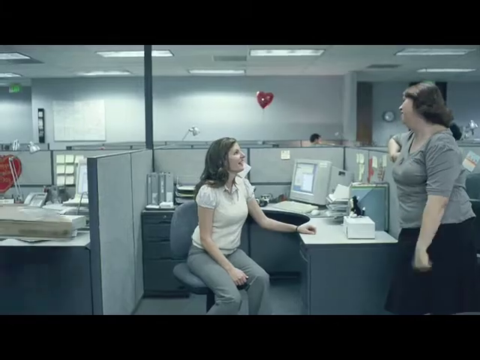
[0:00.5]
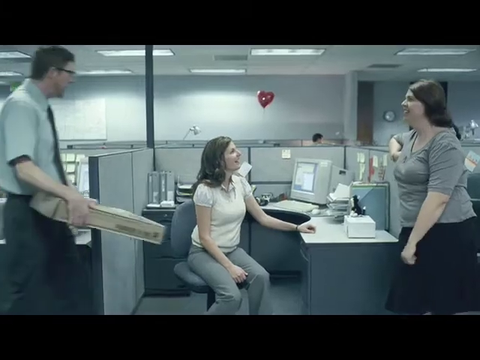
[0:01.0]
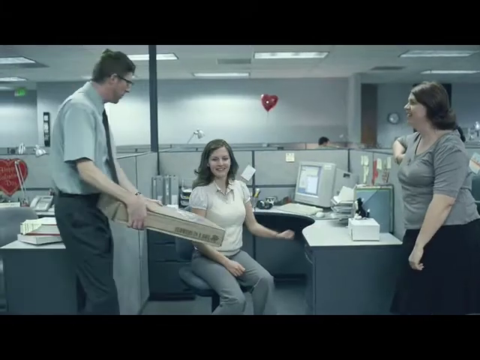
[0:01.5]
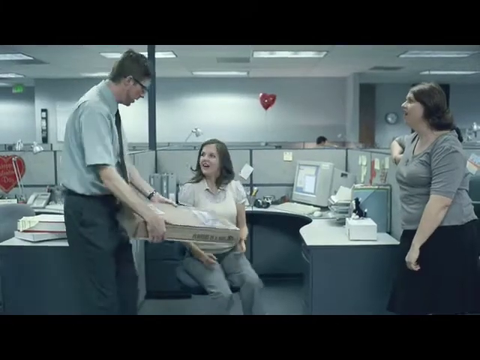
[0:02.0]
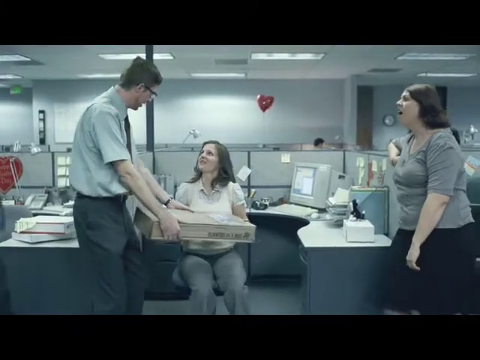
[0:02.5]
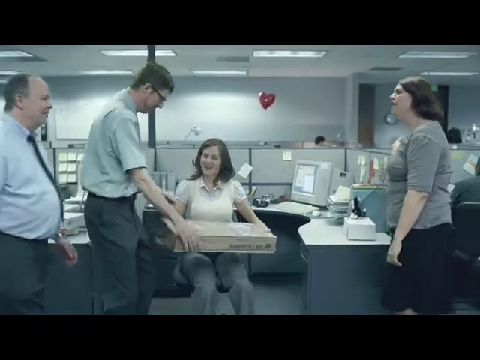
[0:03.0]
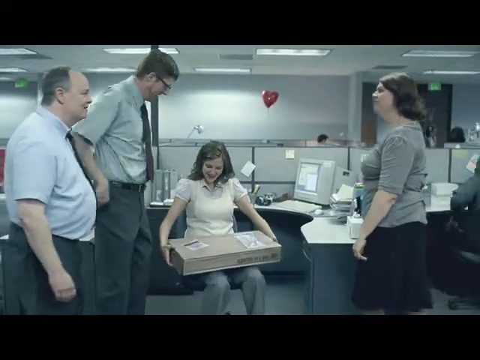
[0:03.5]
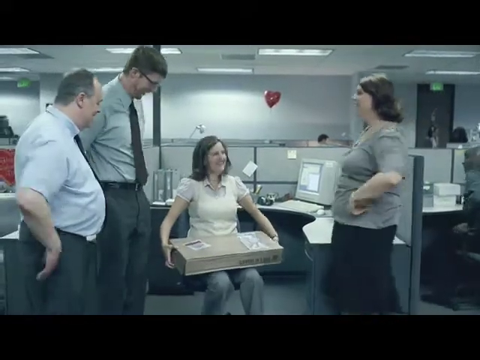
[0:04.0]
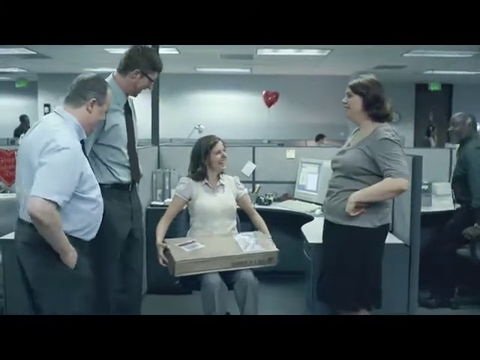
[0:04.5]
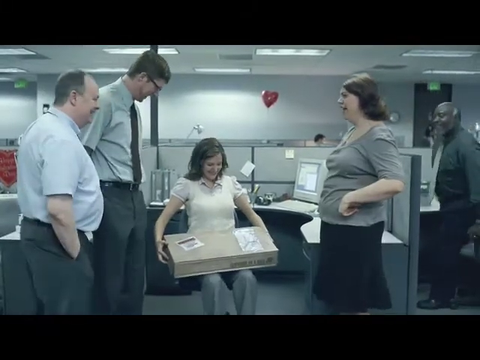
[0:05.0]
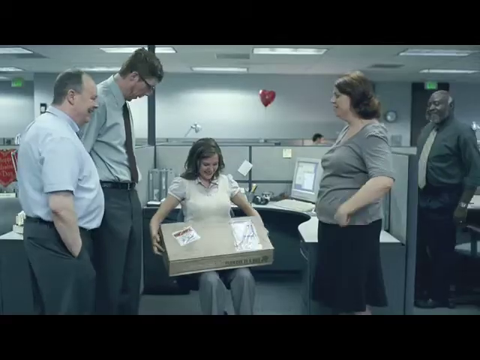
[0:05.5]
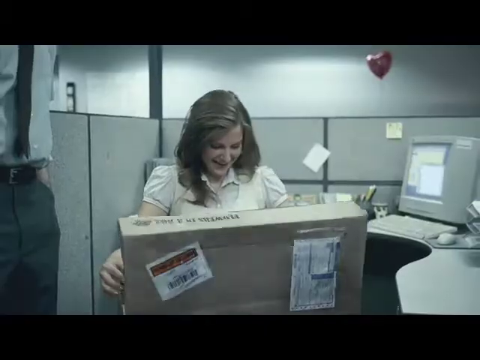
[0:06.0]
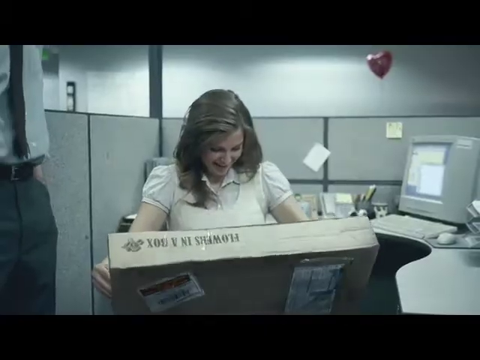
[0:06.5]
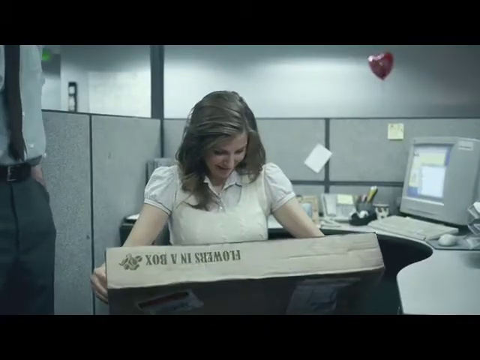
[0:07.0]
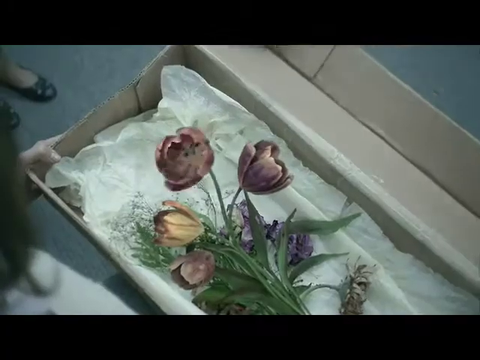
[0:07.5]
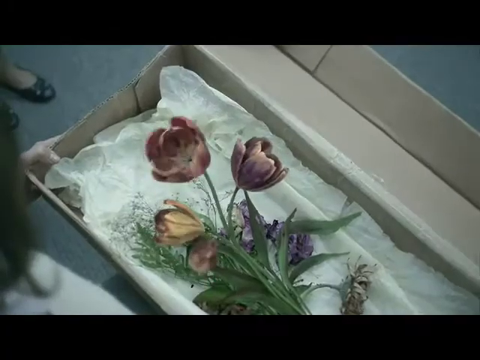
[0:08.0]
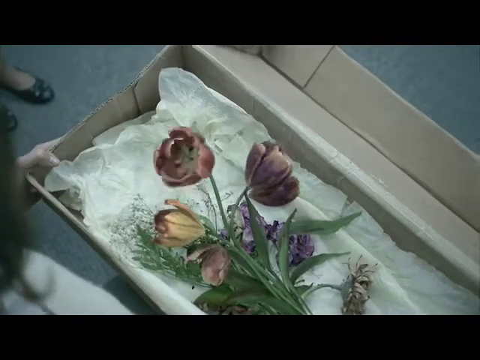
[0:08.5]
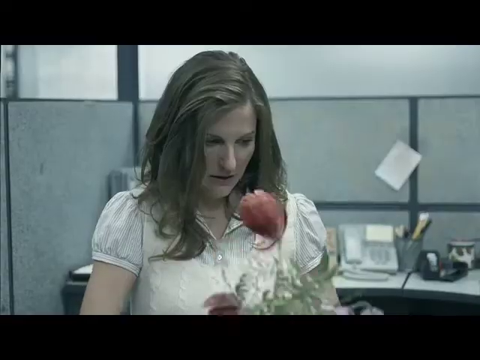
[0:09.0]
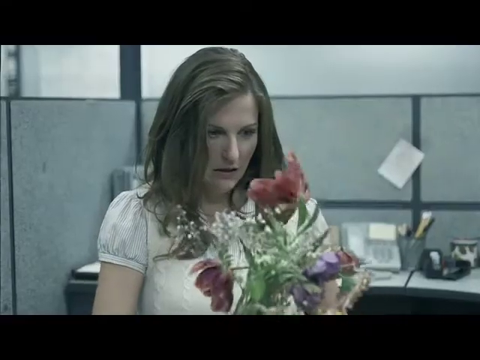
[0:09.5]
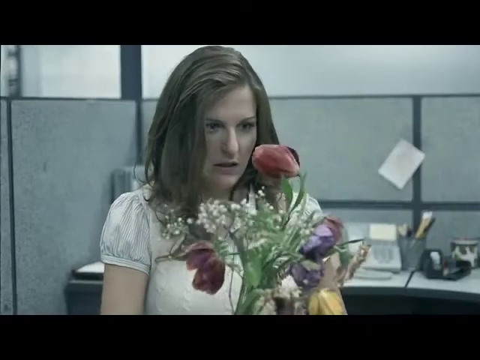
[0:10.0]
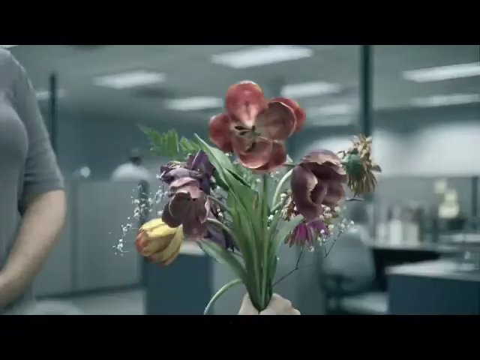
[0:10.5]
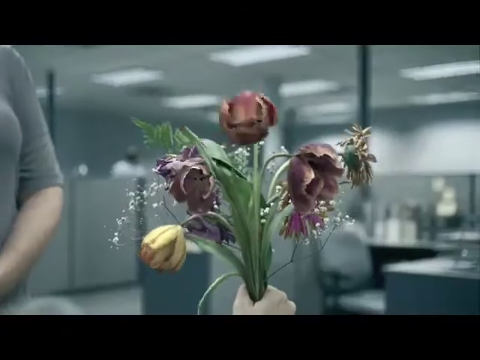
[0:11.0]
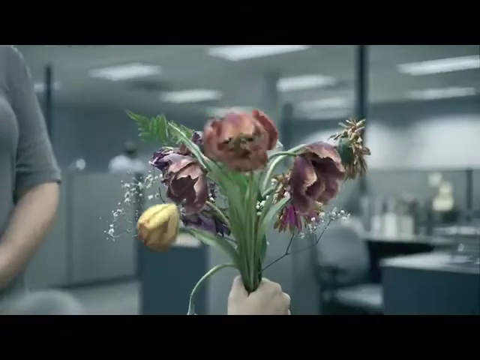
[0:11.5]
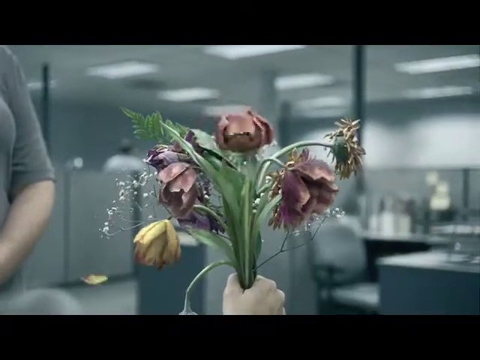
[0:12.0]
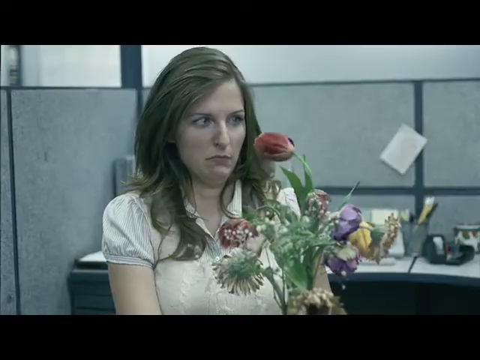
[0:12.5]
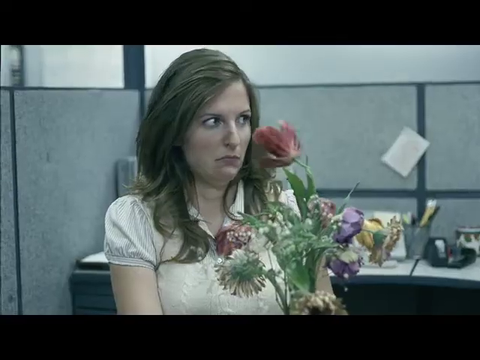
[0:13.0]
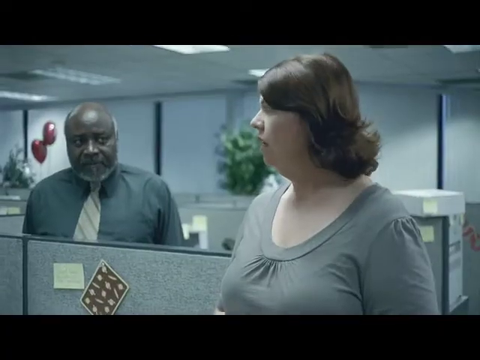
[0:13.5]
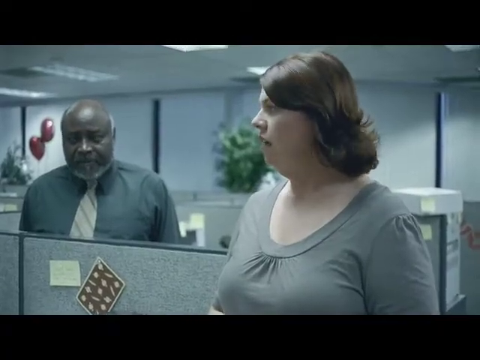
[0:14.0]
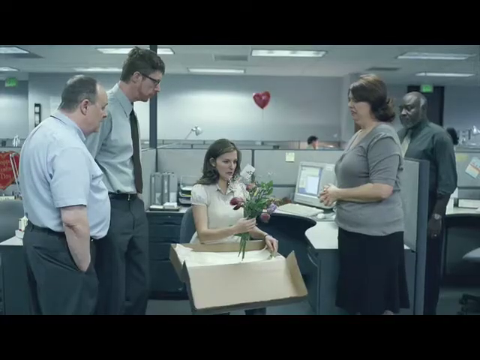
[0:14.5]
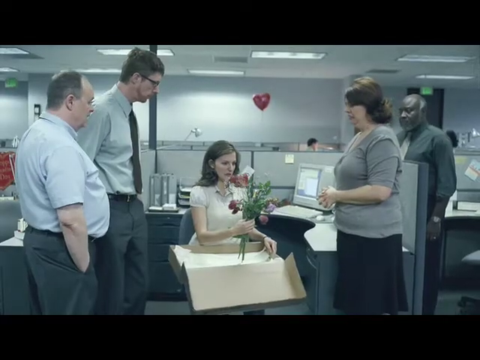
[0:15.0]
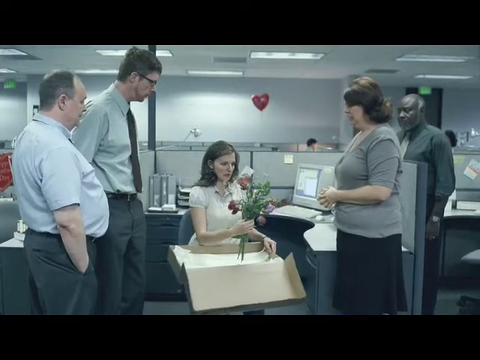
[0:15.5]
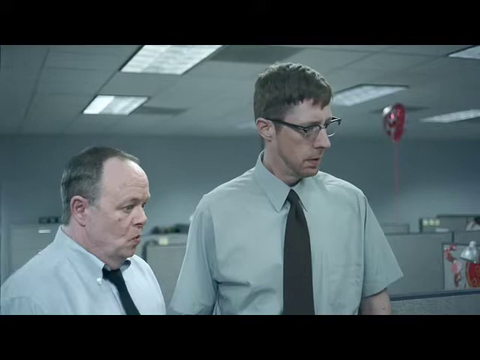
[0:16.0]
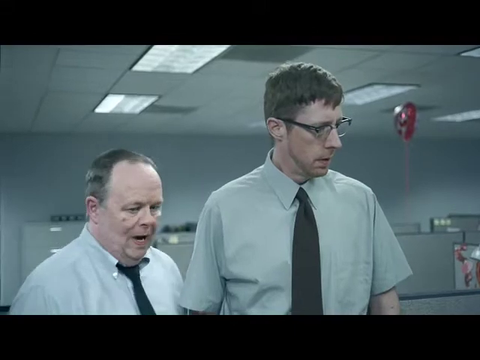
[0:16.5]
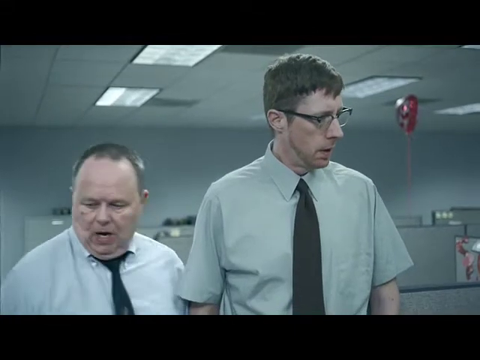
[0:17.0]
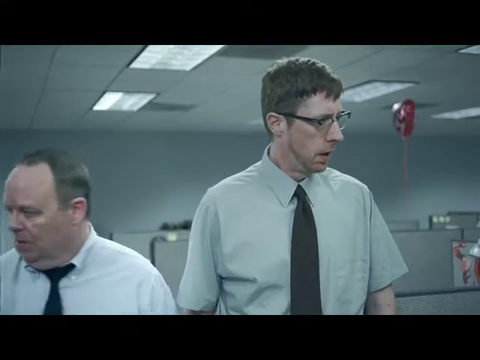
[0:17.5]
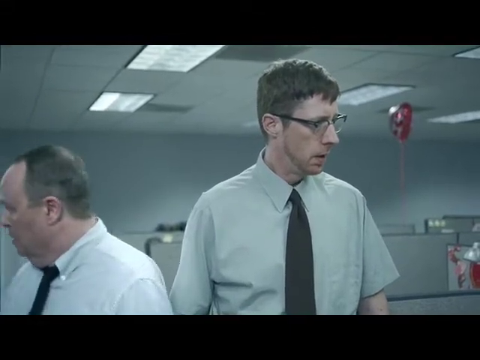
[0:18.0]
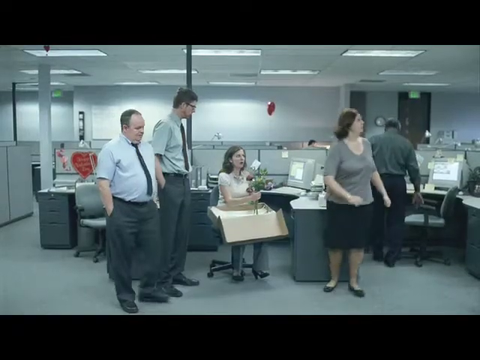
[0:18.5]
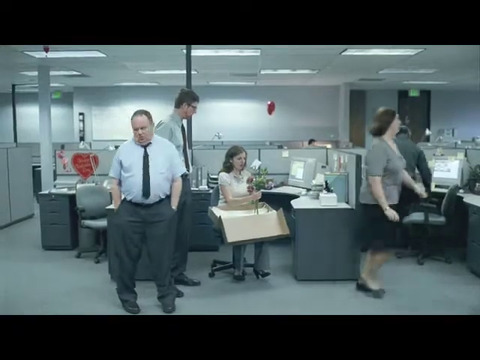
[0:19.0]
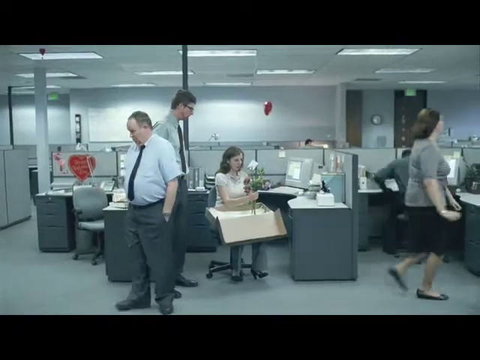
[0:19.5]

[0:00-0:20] Two women stand in an office talking to each other; both look quite happy. From the left side, a man carrying a box enters and hands it to the woman in the middle. The woman on the right looks extremely jealous, but not upset. Another man is on the left: a somewhat bigger, balding man in a blue shirt and a tie that kind of wraps around his body, with dress pants. Everyone is in casual business attire. When the woman in the middle receives the box, everyone in the office seems to get excited and want to see what comes out of it and whether she likes it. She opens the box and there are flowers inside; the box says "flowers in a box." As she looks at them, the flowers appear to be talking to her, and she is very surprised. The flowers keep talking without stopping, and nobody seems impressed, suggesting the flowers may be saying rude things. The camera pans to the two men on the left, where the bigger, older man is absolutely blown away and upset, and he walks away. Everyone except the man who handed her the box quickly walks away.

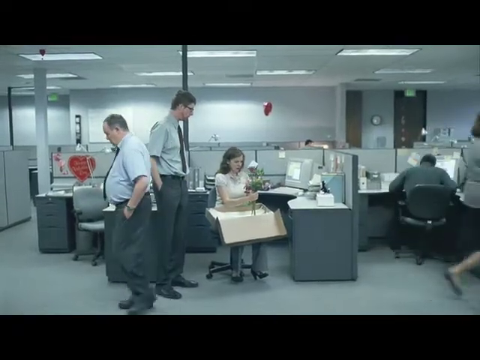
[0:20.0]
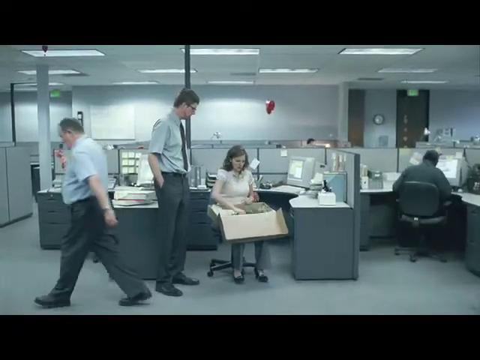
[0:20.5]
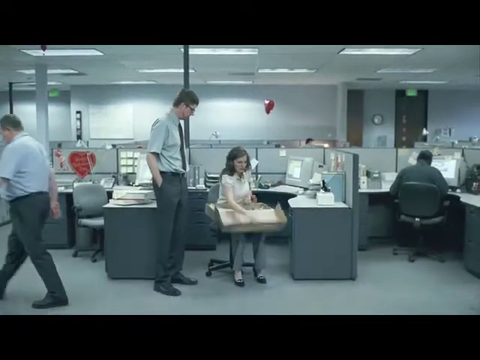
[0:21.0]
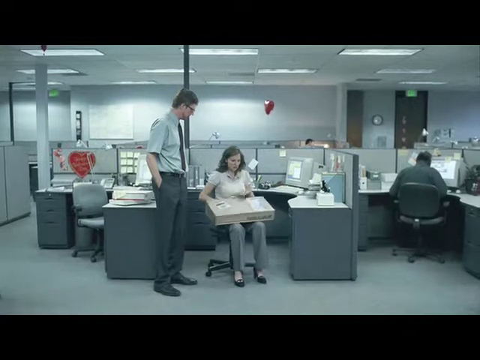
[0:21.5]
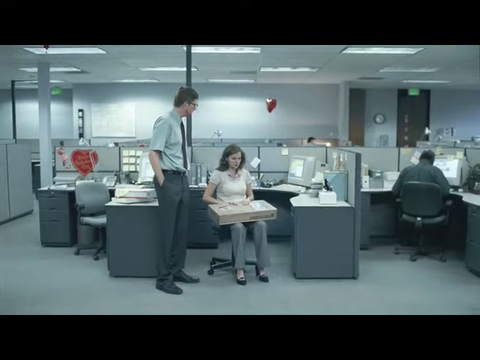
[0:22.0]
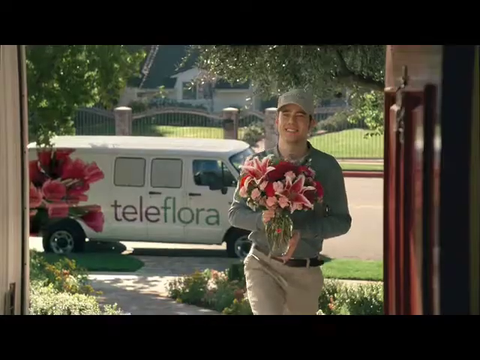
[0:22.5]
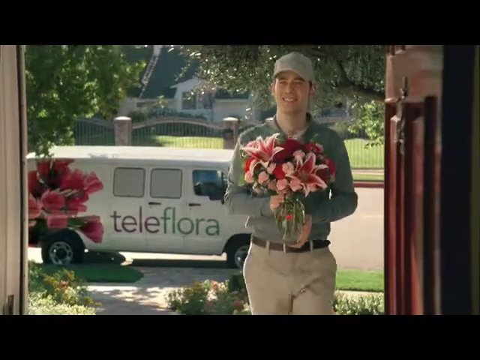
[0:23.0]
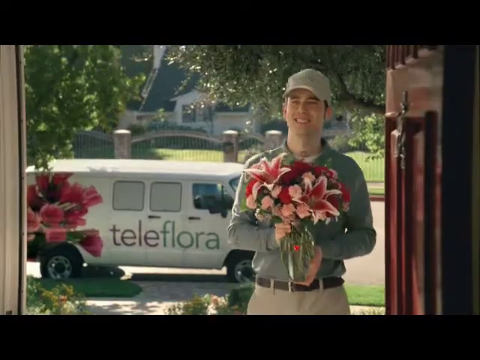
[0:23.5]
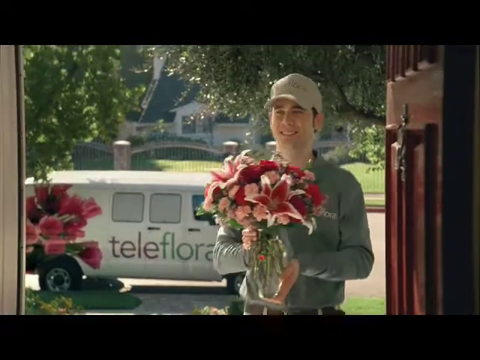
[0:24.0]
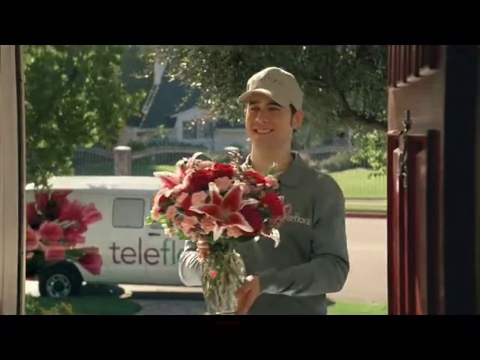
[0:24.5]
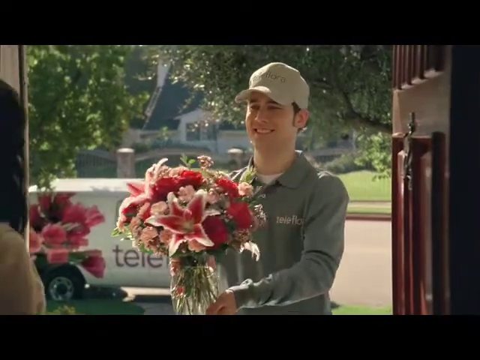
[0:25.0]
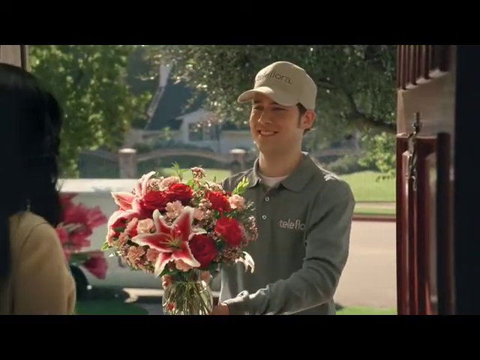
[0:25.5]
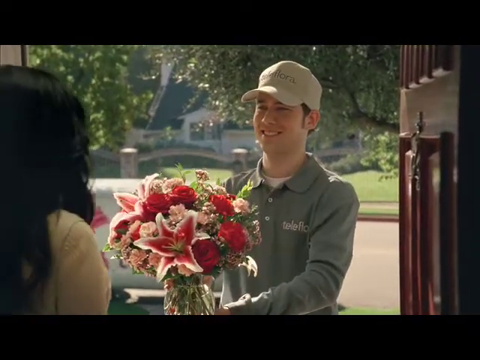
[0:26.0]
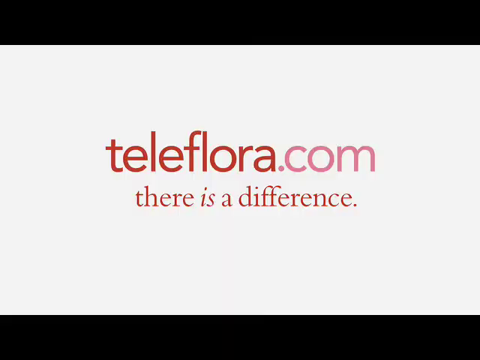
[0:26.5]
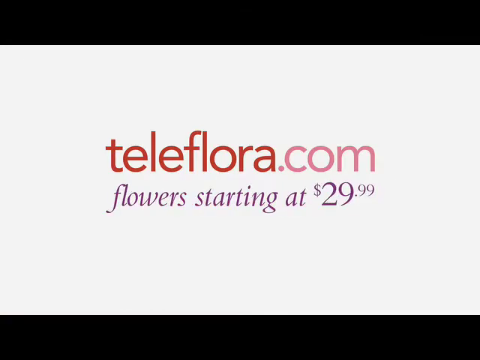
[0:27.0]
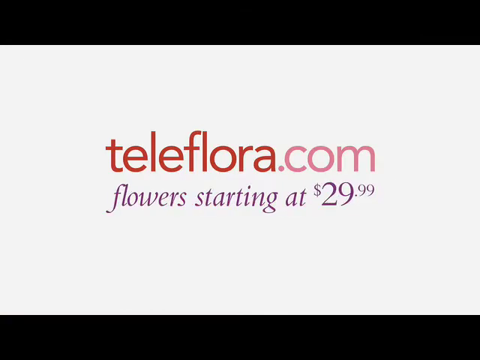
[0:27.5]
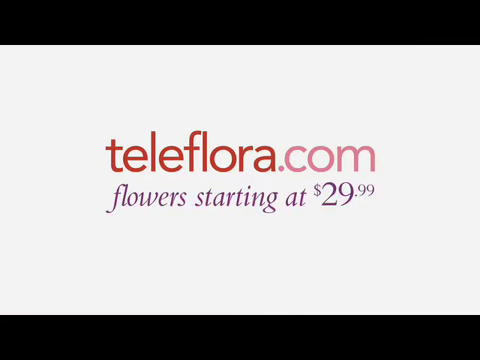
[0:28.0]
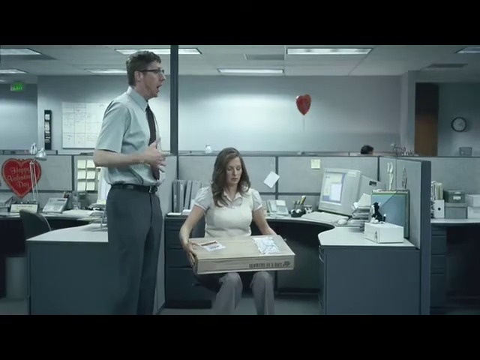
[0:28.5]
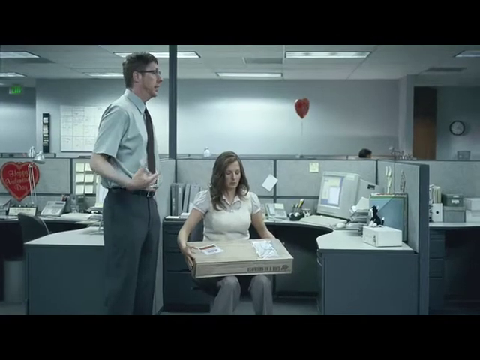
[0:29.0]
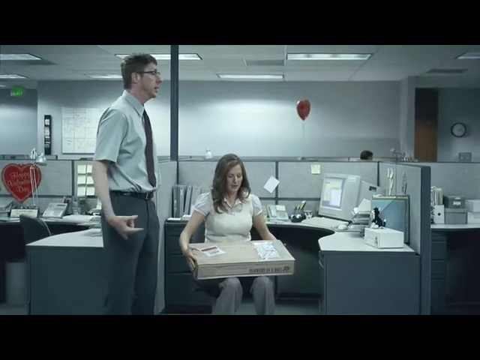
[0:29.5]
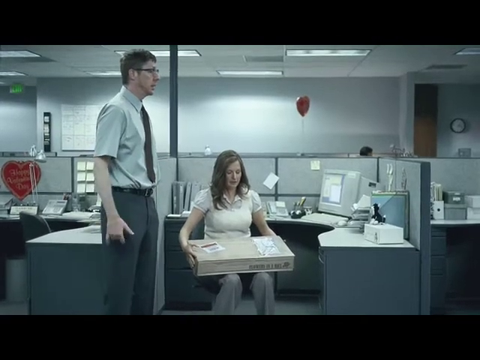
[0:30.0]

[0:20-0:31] A woman walks away on the right side, and a man on the left faces the opposite way, while another man faces a woman in the middle who holds a flower arrangement that has come out of a box. She puts the flowers back into the box extremely quickly and closes it, as if they were extremely insulting to her. One man just stands there and watches in confusion. The scene switches to a company van on a road, and a man walks up to a house door holding a flower arrangement with a glass jar holding it all together. He hands it to a woman at the door. Text then reads "telefloral.com, flower, starting at $29.99." The video goes back to the office, where the tall, skinny man who handed her the box says something, apparently as comic relief.